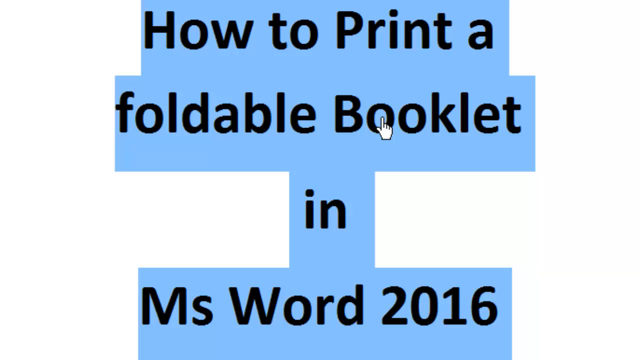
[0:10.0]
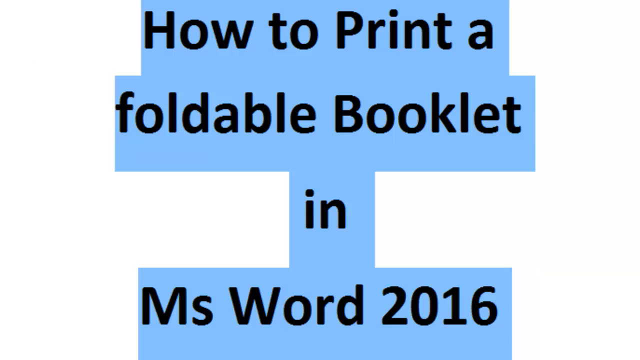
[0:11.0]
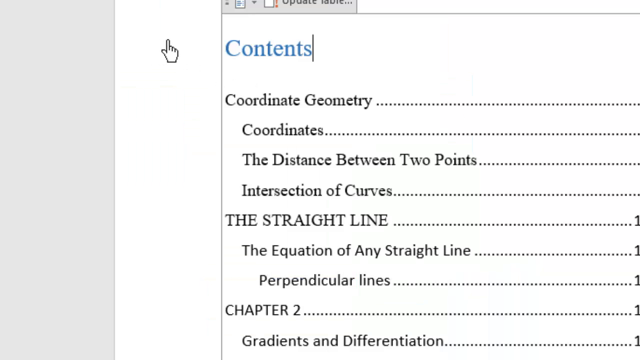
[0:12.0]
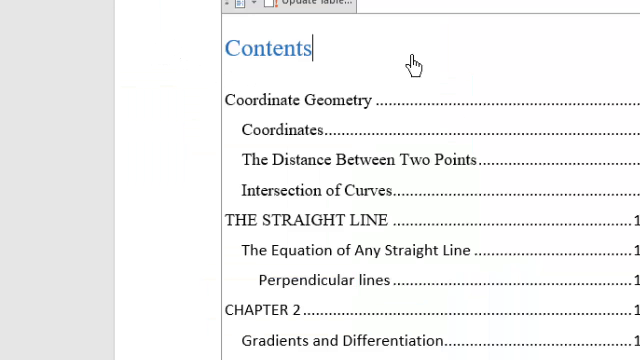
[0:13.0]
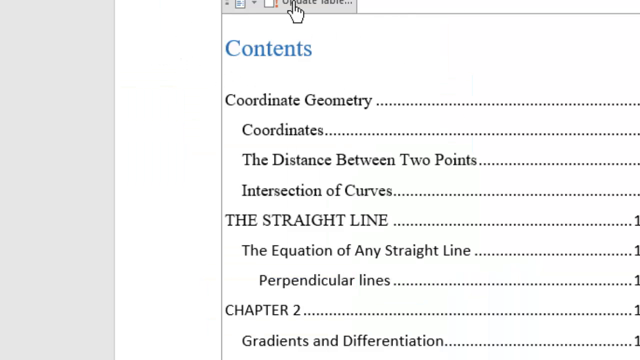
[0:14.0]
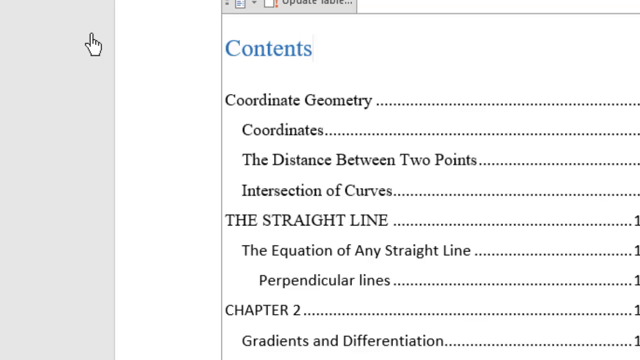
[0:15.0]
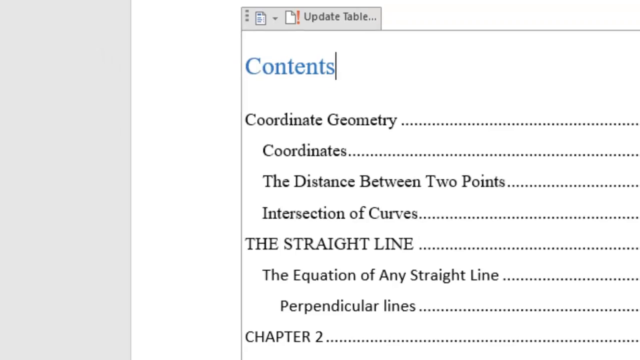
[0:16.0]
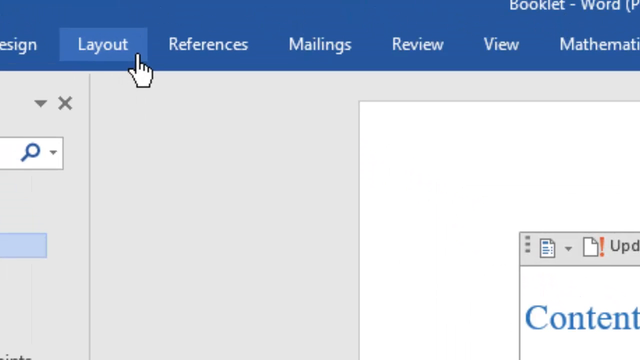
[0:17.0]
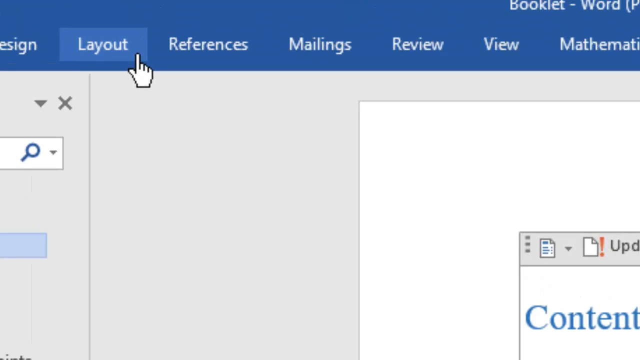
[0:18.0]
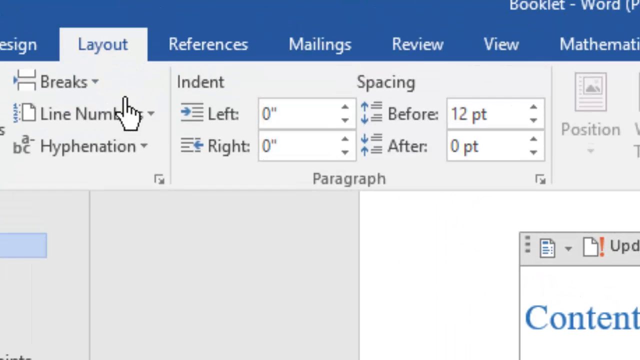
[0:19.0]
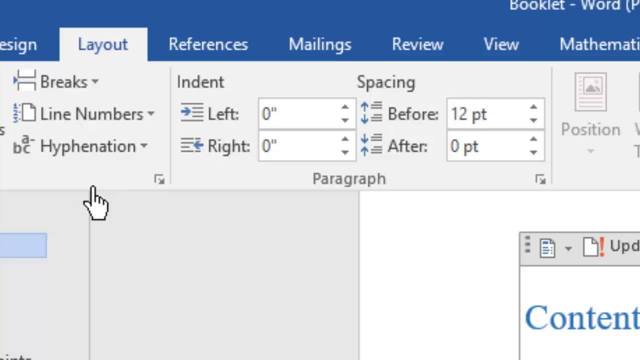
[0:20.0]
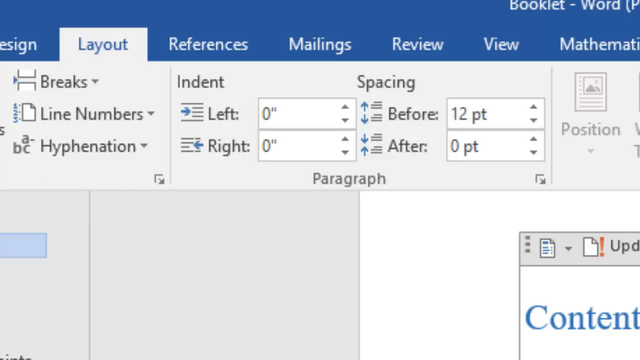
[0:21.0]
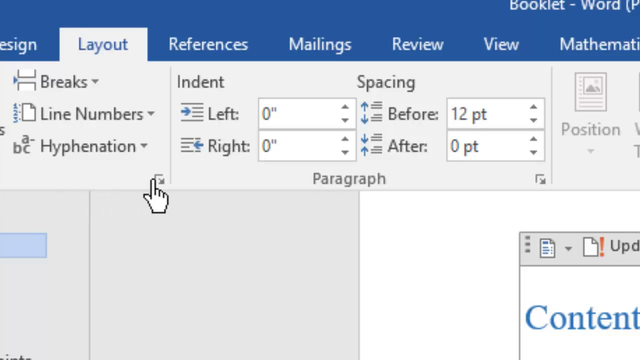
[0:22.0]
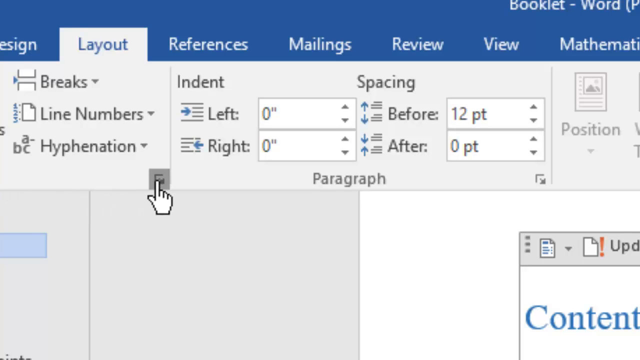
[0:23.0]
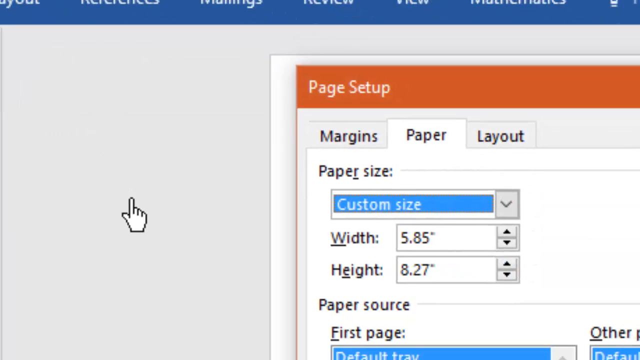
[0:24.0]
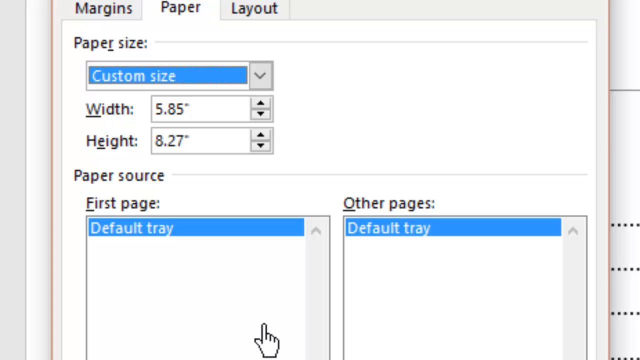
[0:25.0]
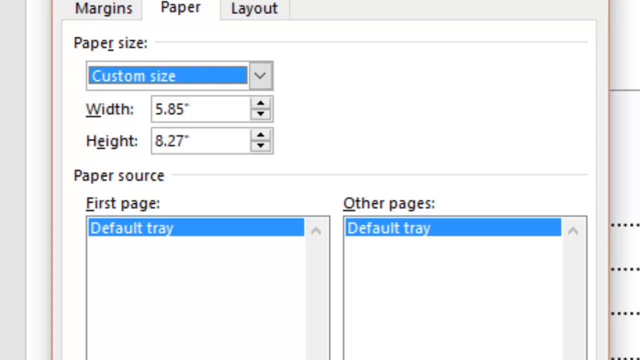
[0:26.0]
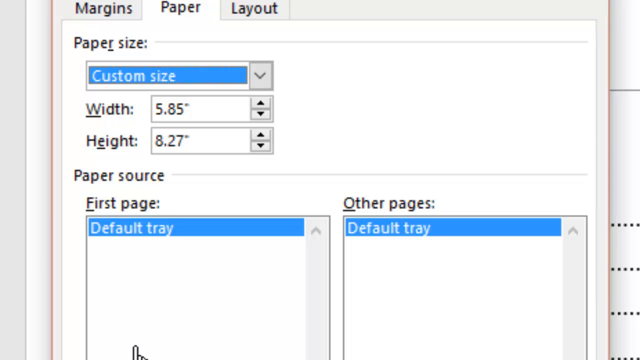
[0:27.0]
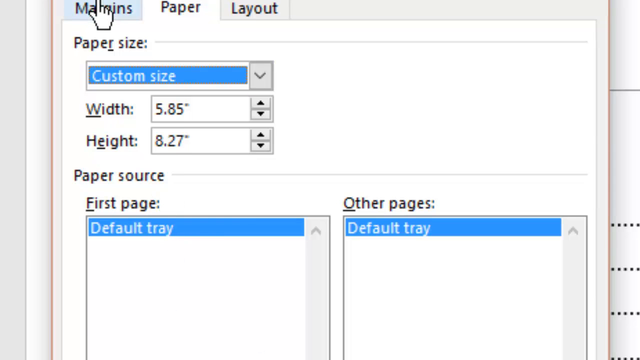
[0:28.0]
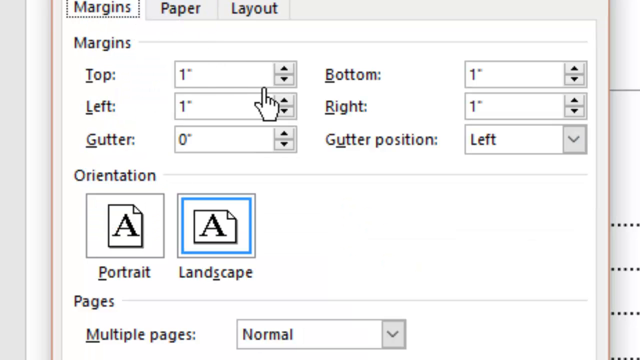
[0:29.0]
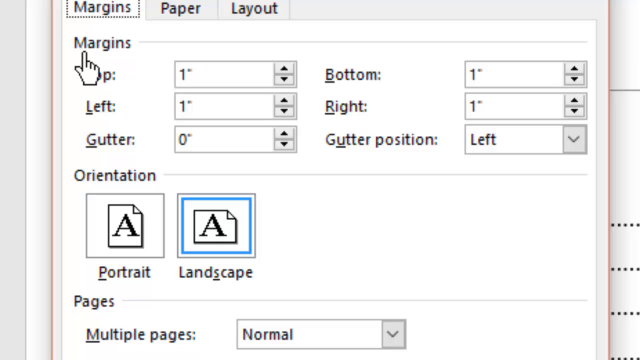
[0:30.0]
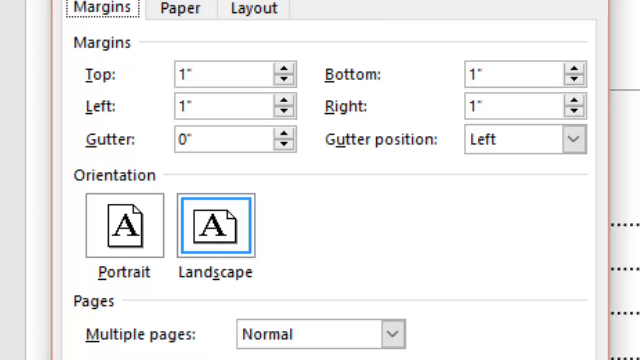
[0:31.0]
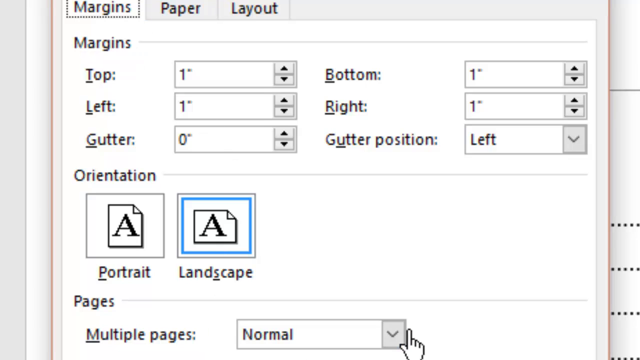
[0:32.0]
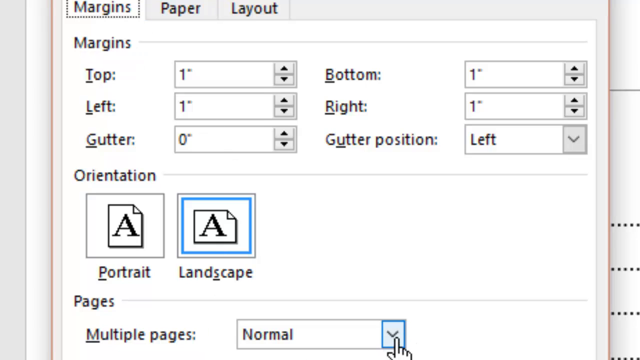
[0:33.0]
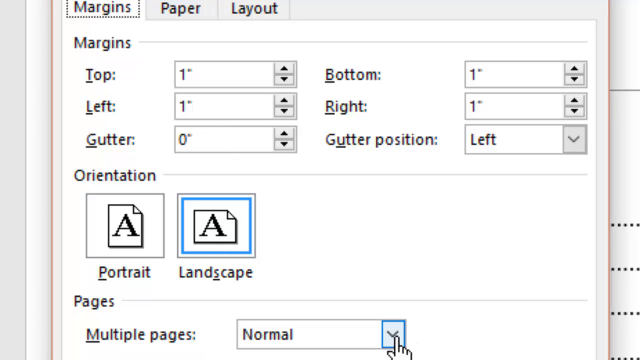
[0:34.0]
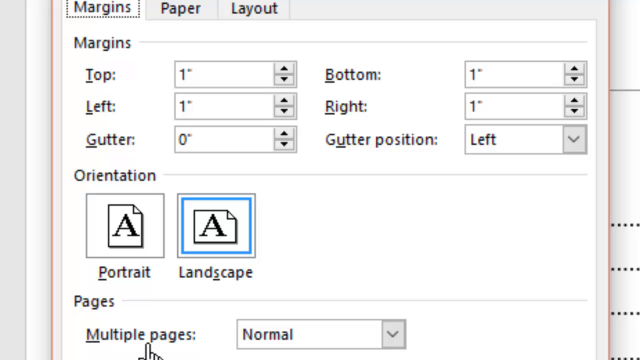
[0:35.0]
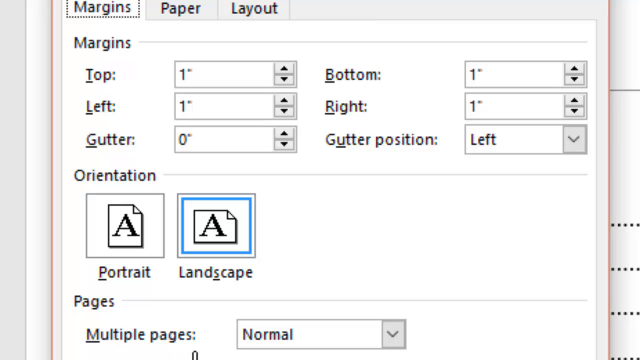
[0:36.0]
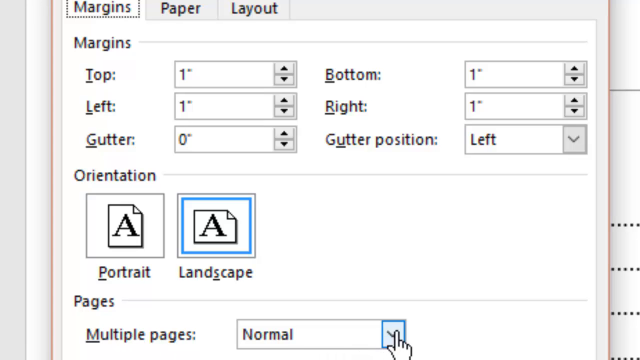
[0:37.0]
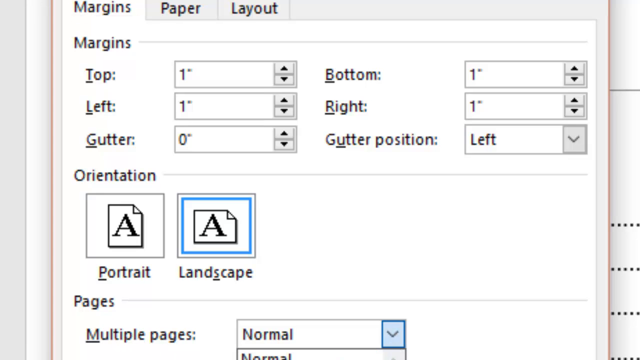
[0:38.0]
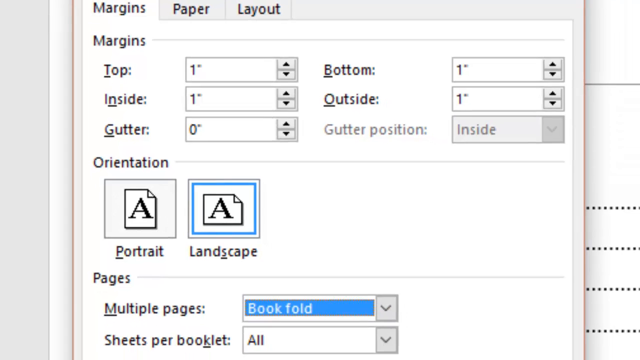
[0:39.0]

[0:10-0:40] Someone films themselves using Microsoft Word. In a blank document, very large text reads "how to print a foldable booklet in MS Word 2016," highlighted in blue. A mouse cursor sweeps from right to left across the text. The view then changes to a different page, where the cursor, shaped like a right human hand with a pointing finger, makes some circle motions. It goes to the top left of the program and clicks on the word "layout," which is highlighted with a box. The mouse then moves down, kind of moving left and right, and clicks a tiny square box, which opens a separate box called "page setup." The mouse moves over to the page setup box and clicks the margins tab, kind of moving up and down on it, and then the mouse disappears.